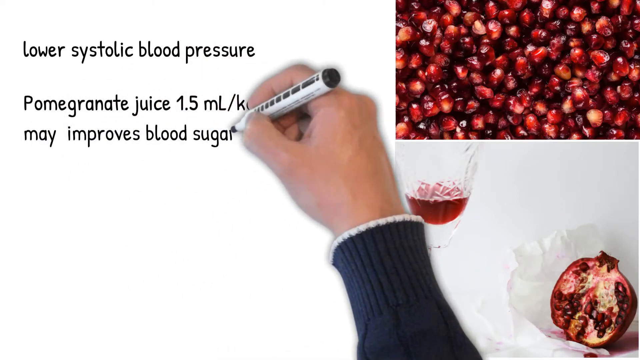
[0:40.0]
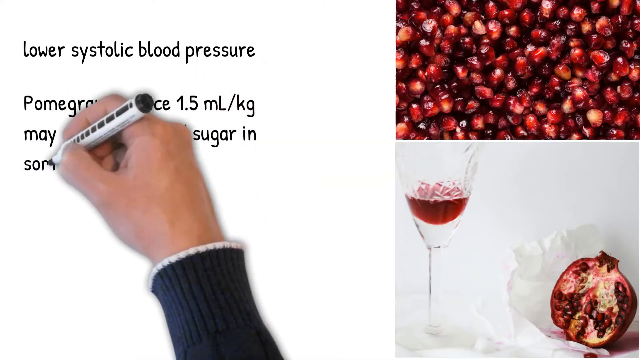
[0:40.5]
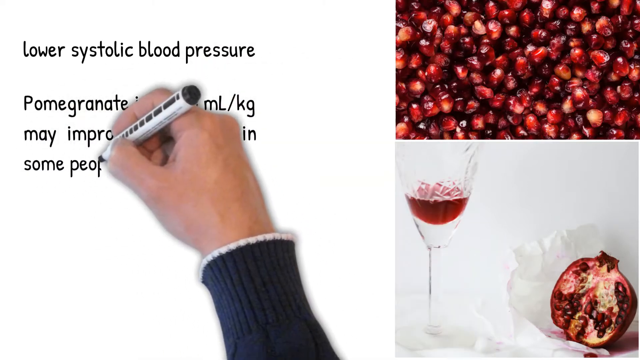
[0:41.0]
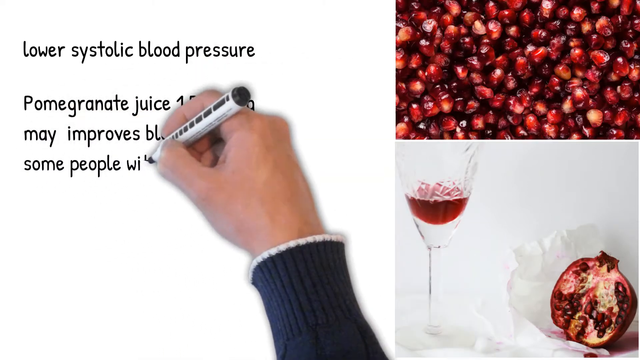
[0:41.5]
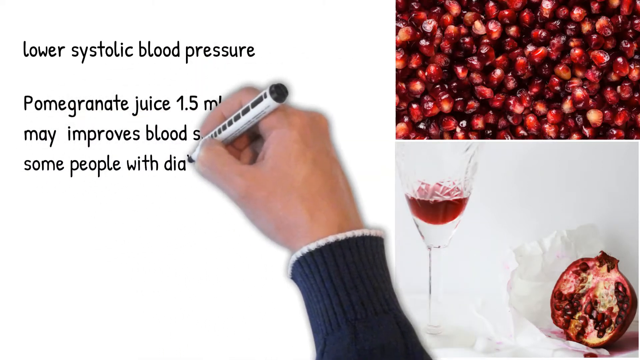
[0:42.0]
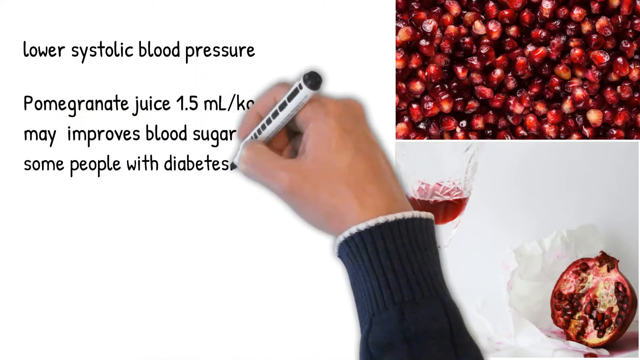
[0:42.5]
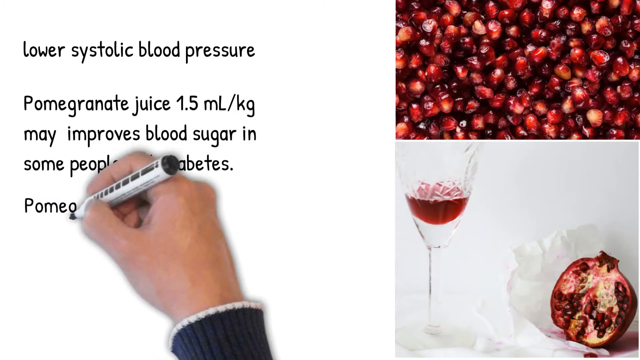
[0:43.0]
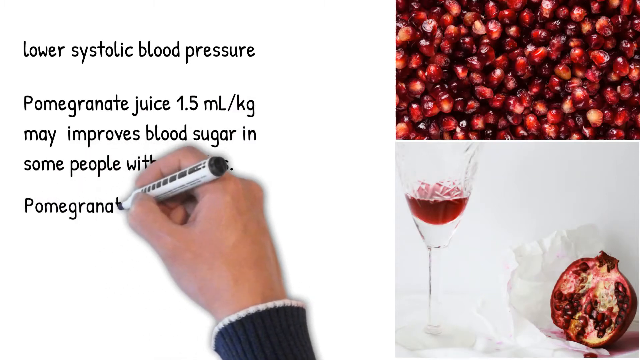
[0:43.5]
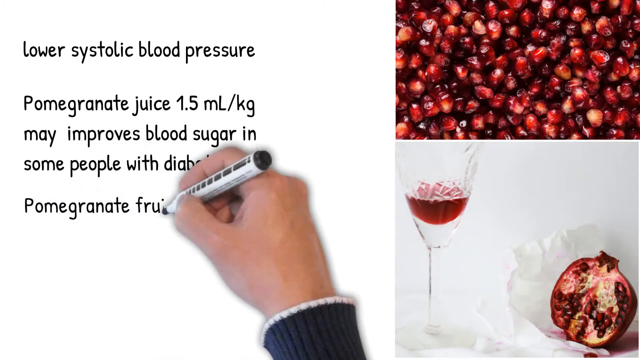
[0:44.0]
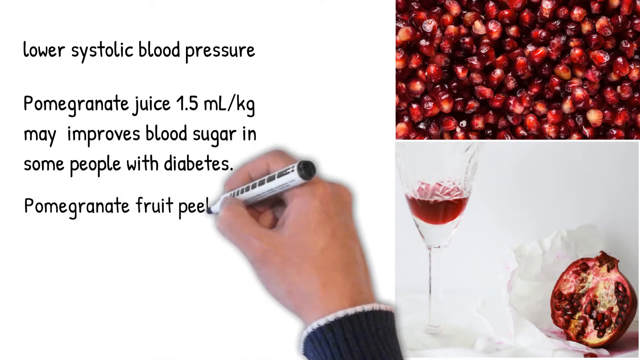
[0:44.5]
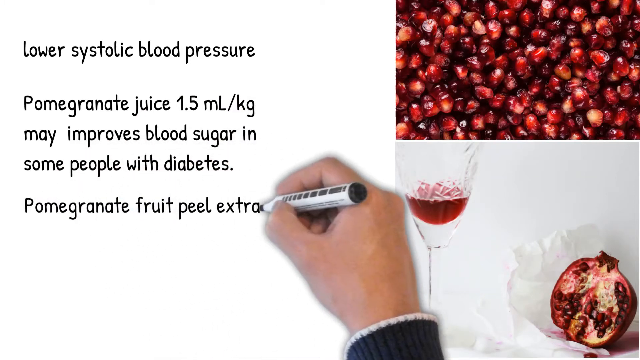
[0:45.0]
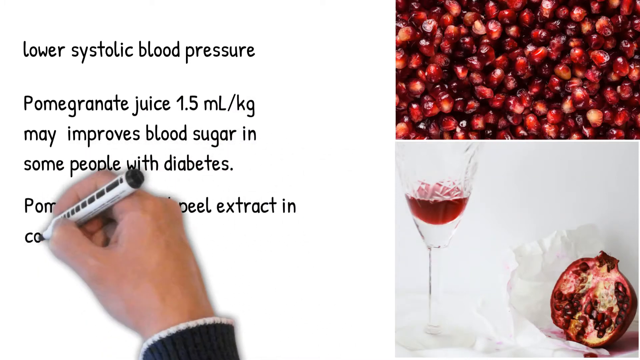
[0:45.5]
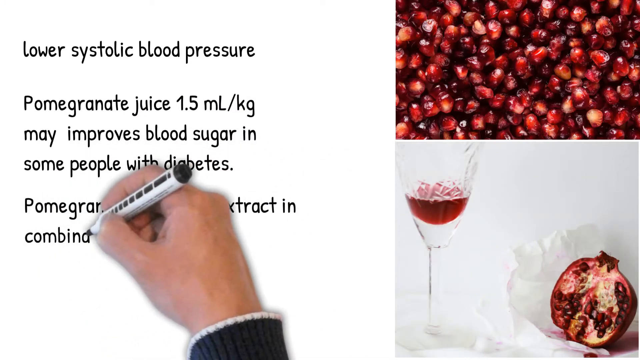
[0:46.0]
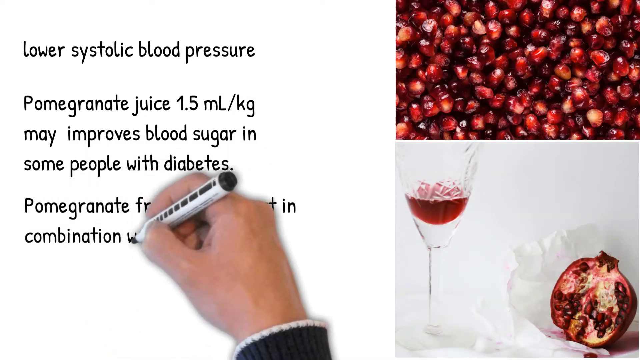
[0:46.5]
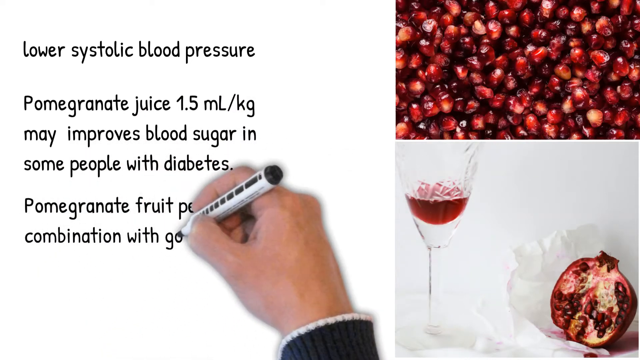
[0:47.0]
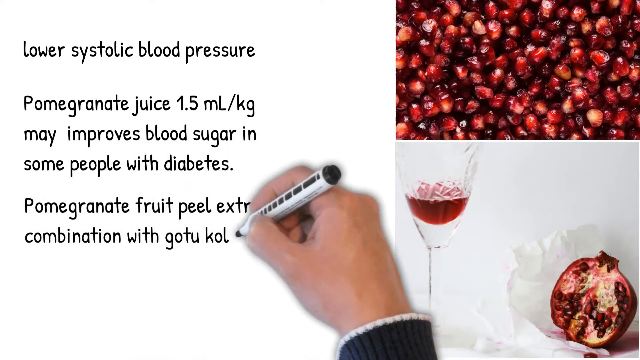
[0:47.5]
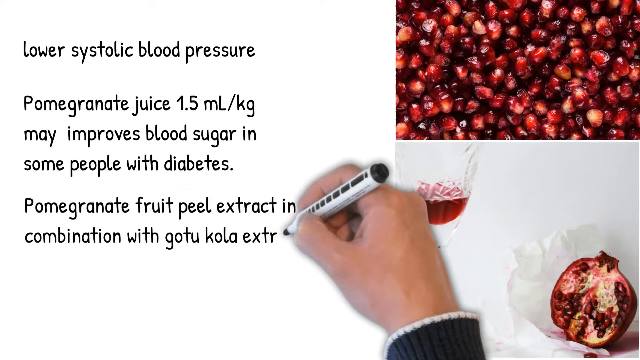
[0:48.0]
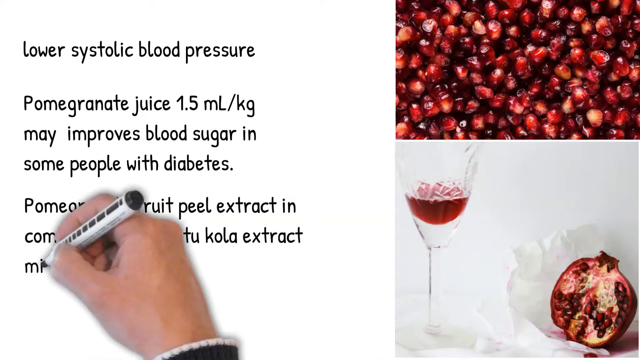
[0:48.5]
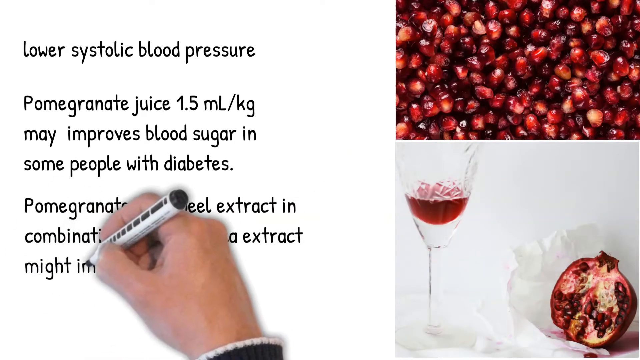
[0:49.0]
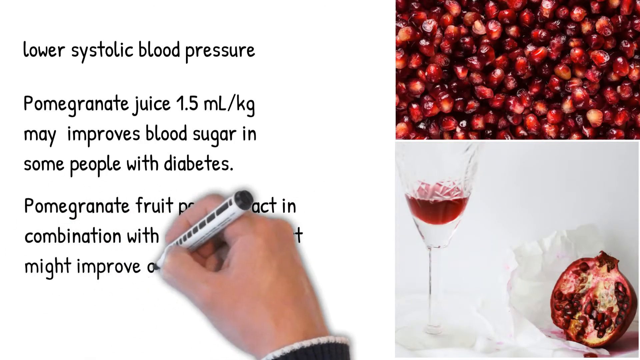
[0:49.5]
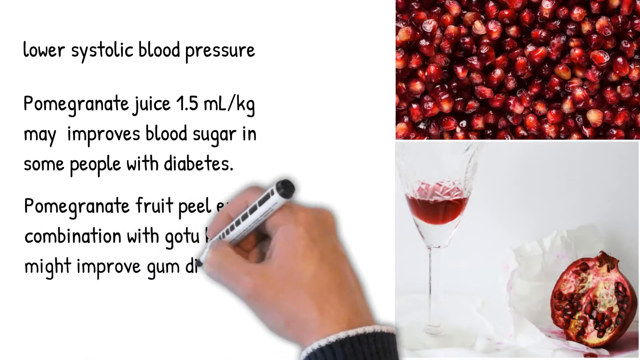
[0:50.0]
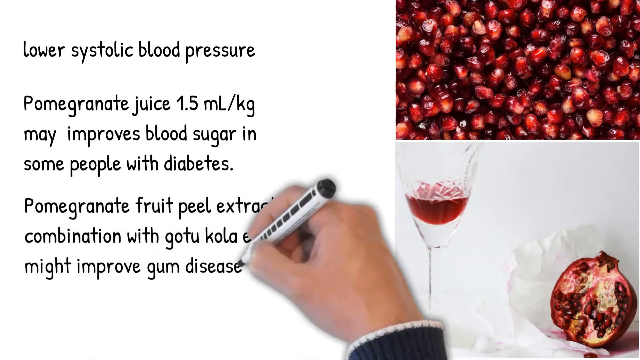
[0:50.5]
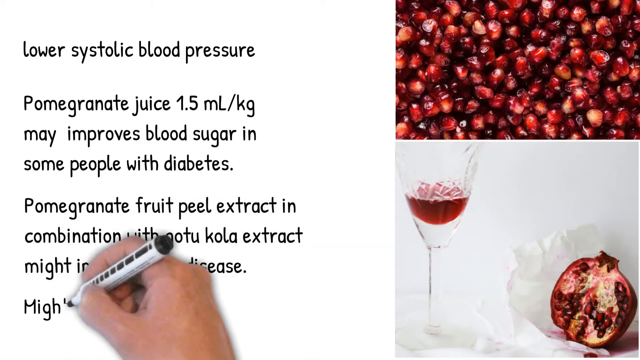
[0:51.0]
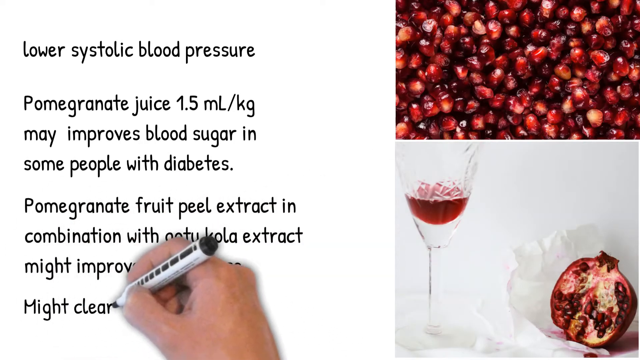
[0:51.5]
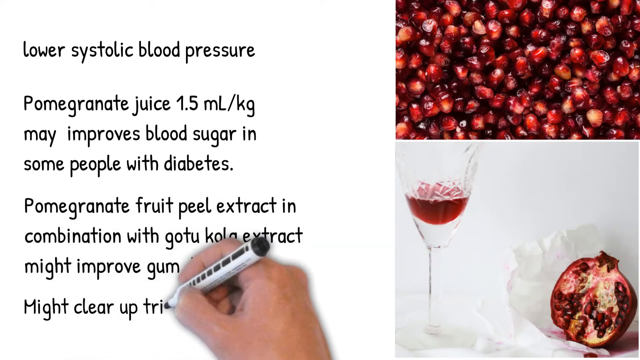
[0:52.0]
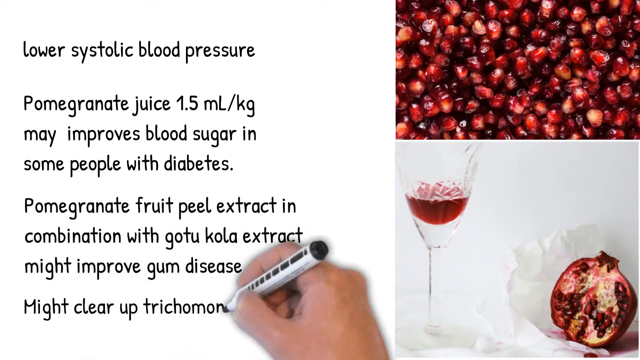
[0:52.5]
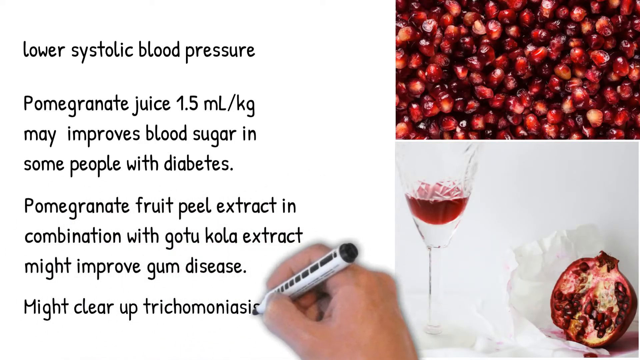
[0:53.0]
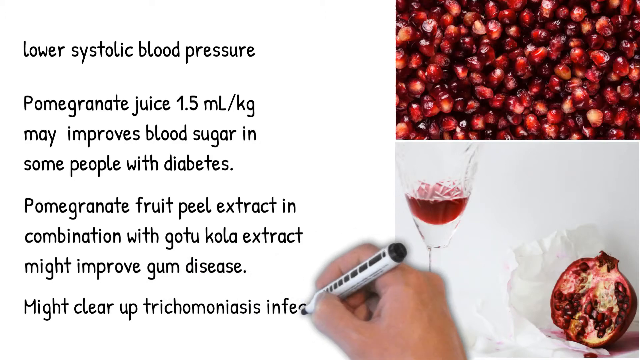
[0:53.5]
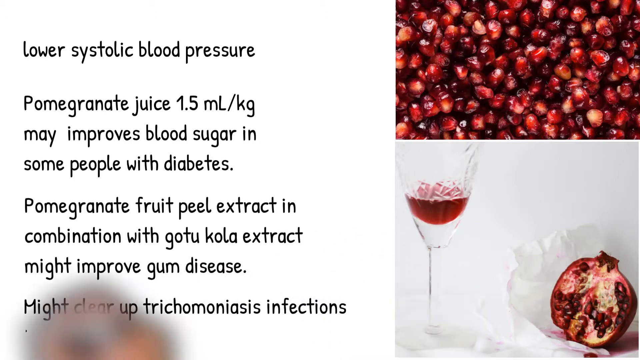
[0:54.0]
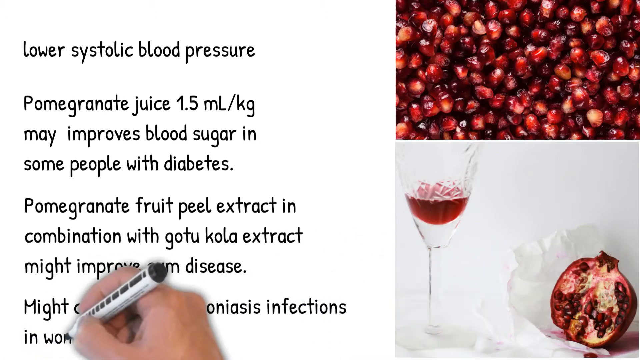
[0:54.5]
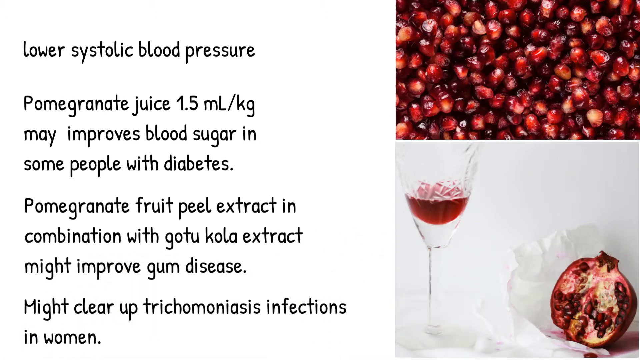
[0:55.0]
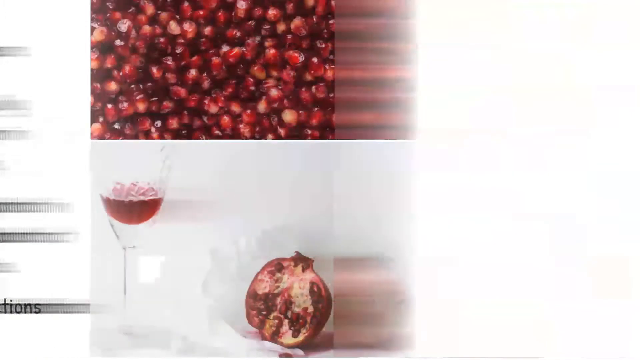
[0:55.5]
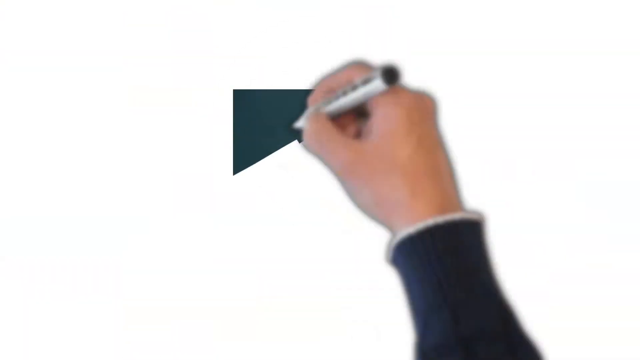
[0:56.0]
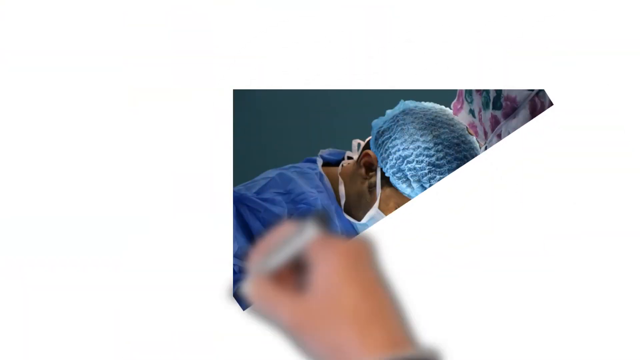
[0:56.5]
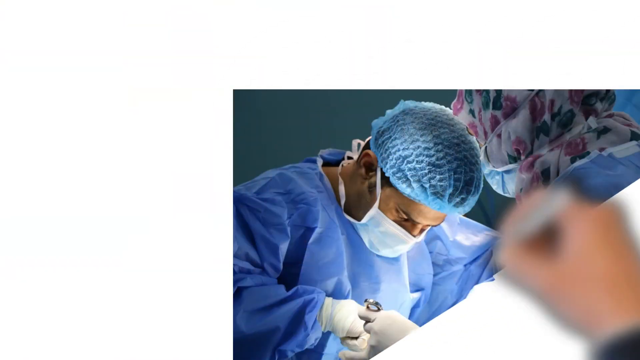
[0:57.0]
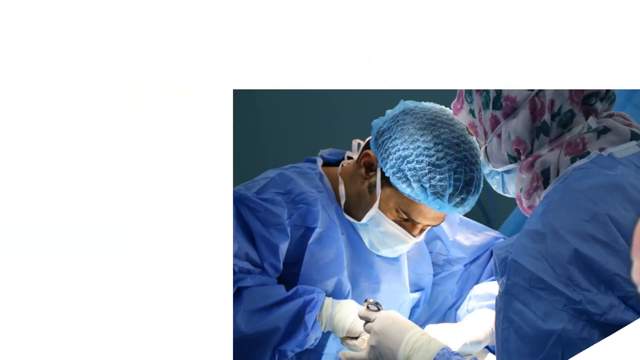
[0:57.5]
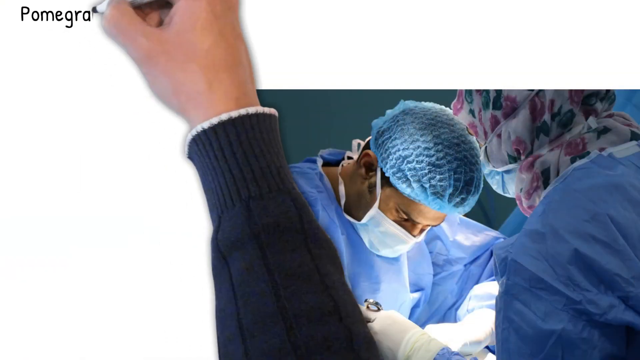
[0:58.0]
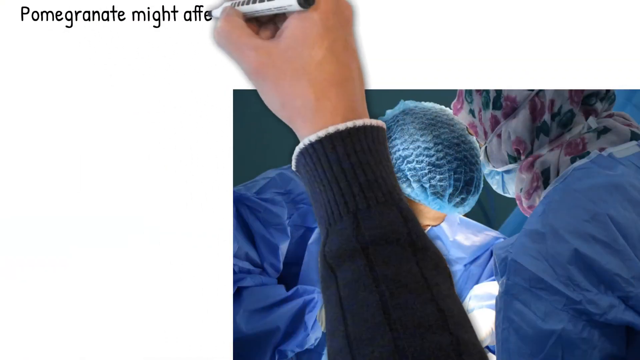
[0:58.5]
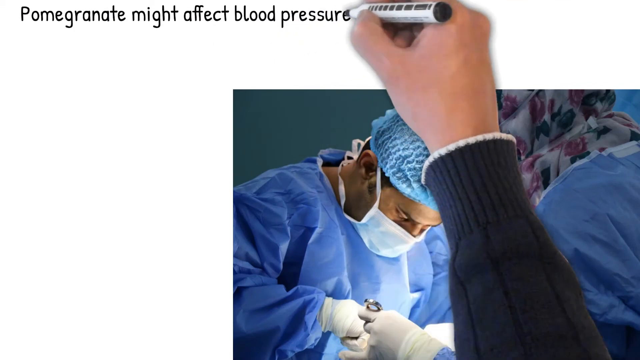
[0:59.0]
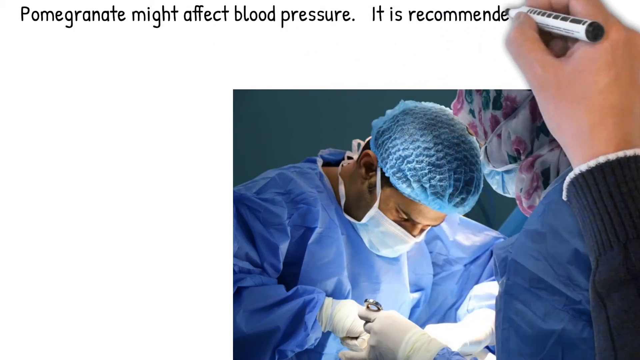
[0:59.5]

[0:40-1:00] The screen shows black text on a white background on the left. On the right side, at the top, is a photograph of a cluster of pomegranate seeds, and below it is another photograph of a cocktail glass with red liquid and a cut part of a pomegranate next to it. The hand holding a pen continues to write: "may improves blood sugar in some people with diabetes. Pomegranate fruit peel extract in combination with gotu cola extract may improve gum disease." The last line is hard to read but looks like "might clear up trichomoniasis infections." The scene then shifts to a new screen where the hand appears to draw a new photograph, which looks to be of two doctors wearing blue scrubs, hair coverings, and masks over their noses and mouths, apparently performing an operation, with the patient cropped out. The hand with the pen then writes "pomegranate might affect blood pressure. It is recommended to stop taking".